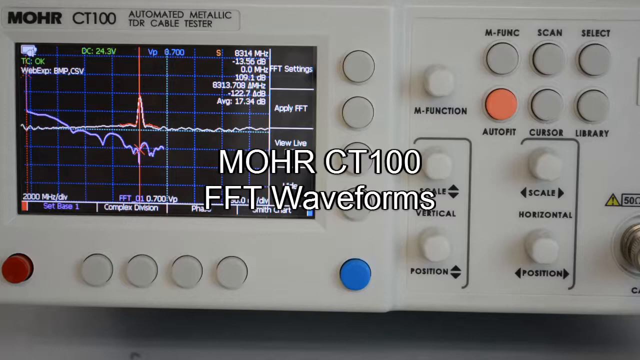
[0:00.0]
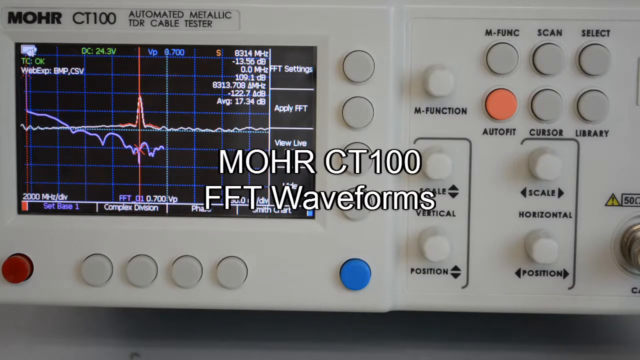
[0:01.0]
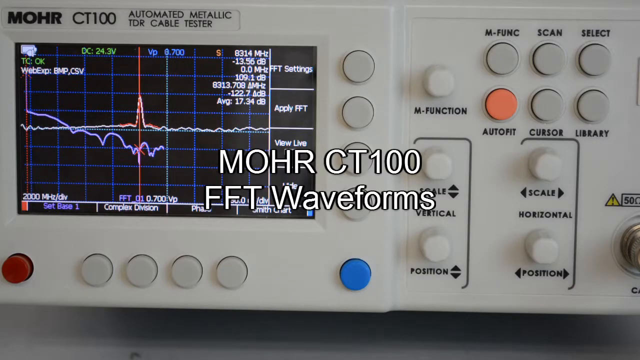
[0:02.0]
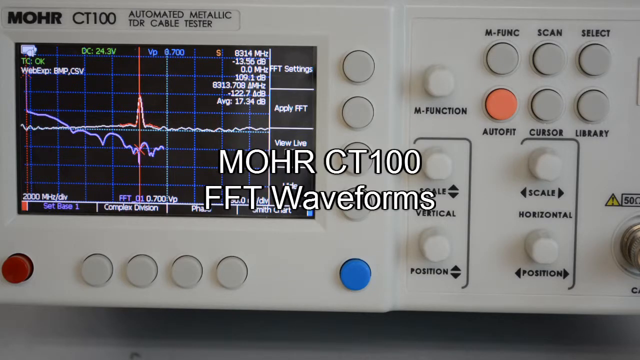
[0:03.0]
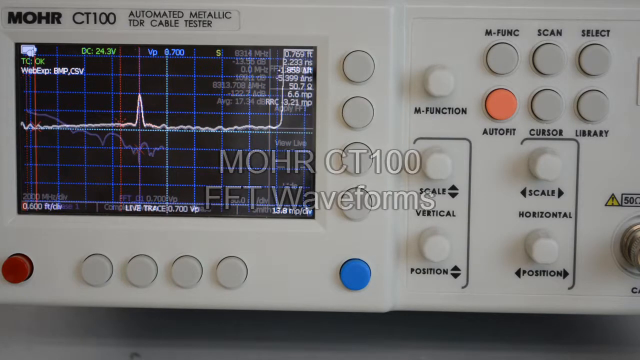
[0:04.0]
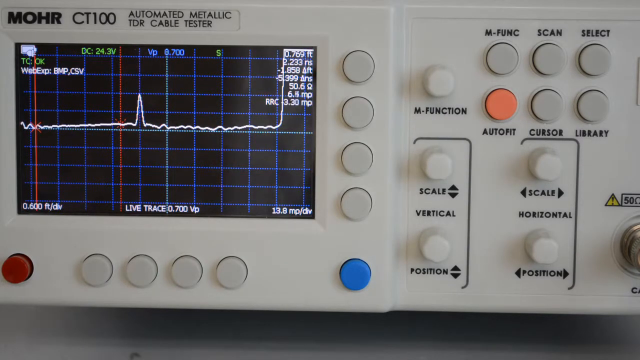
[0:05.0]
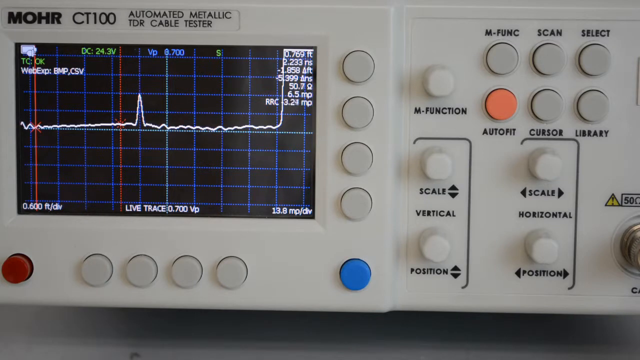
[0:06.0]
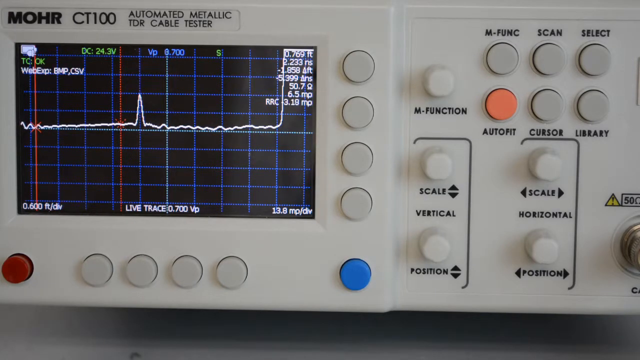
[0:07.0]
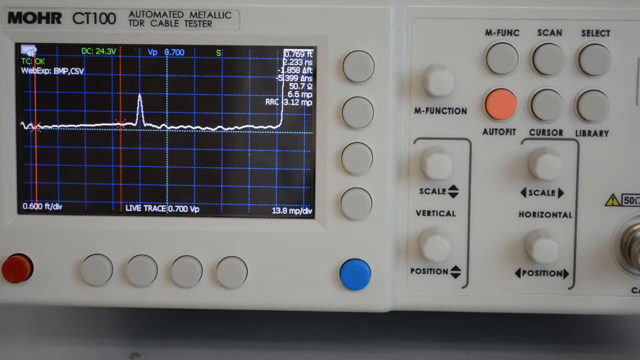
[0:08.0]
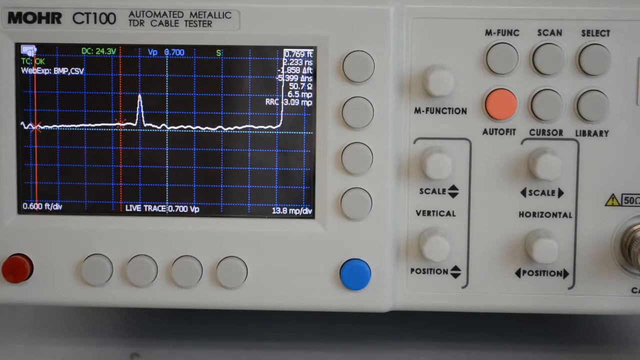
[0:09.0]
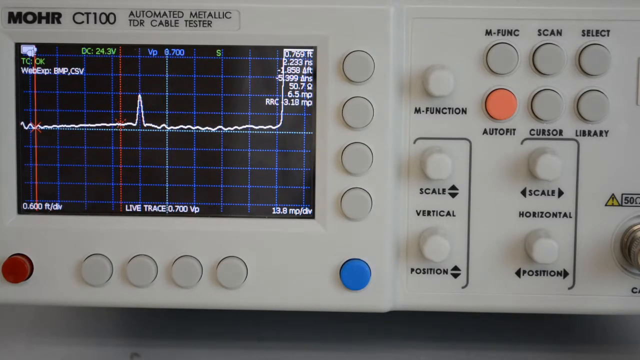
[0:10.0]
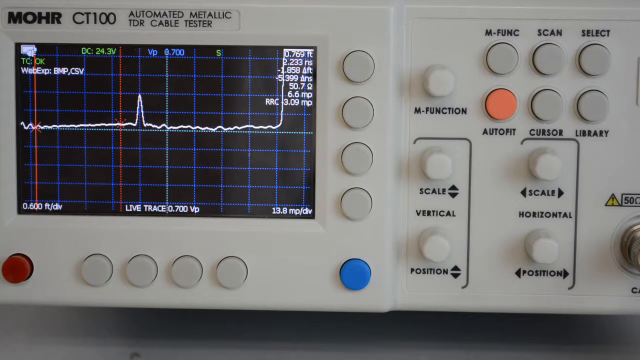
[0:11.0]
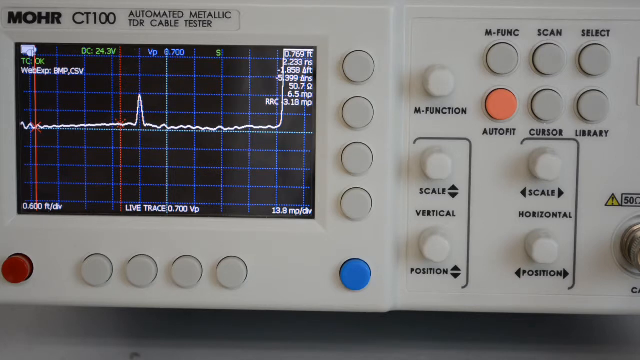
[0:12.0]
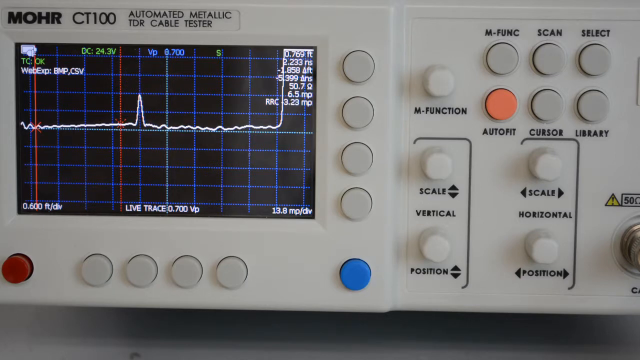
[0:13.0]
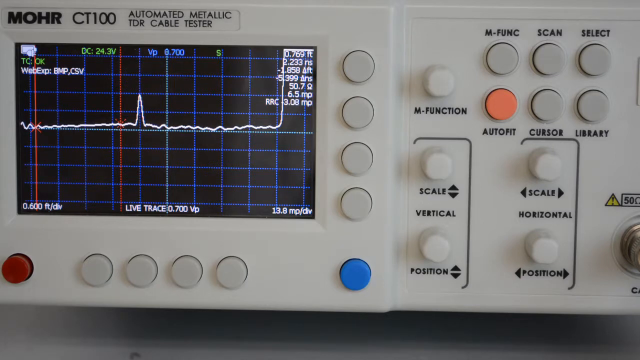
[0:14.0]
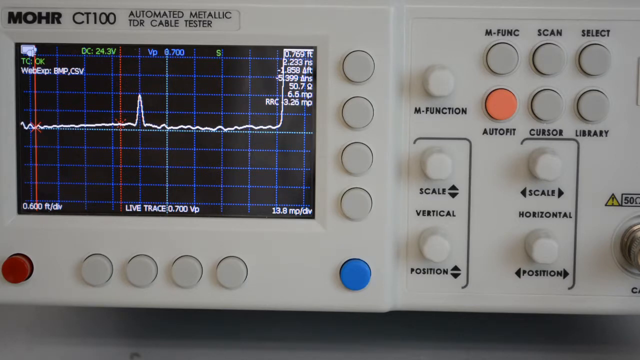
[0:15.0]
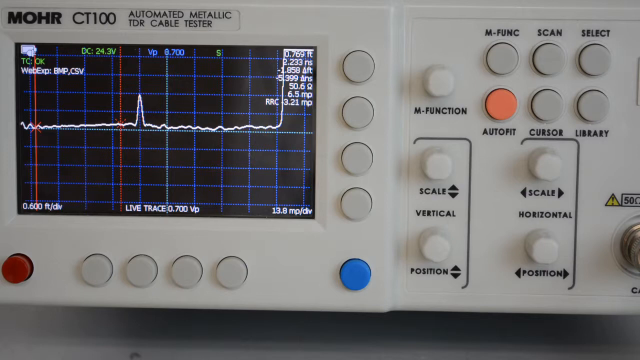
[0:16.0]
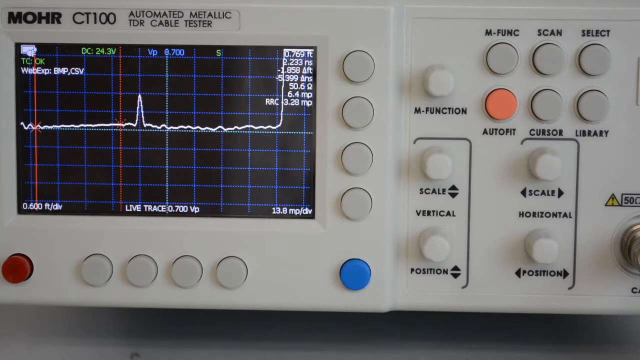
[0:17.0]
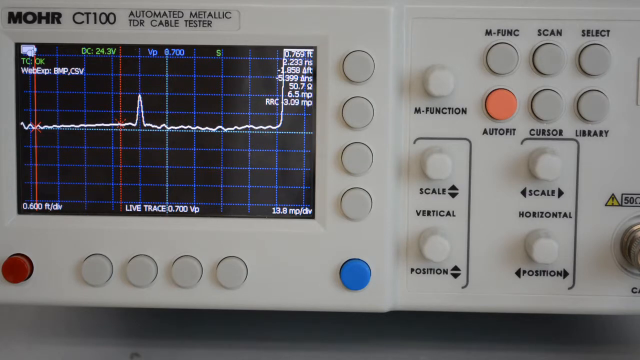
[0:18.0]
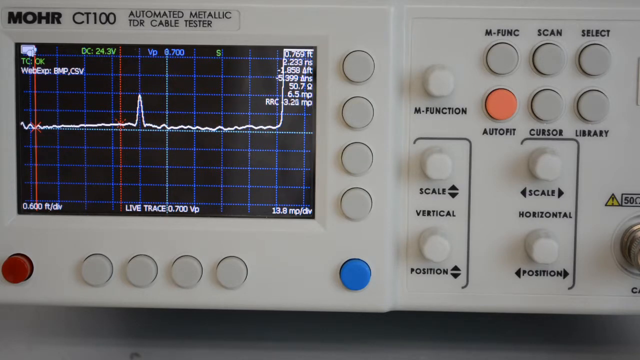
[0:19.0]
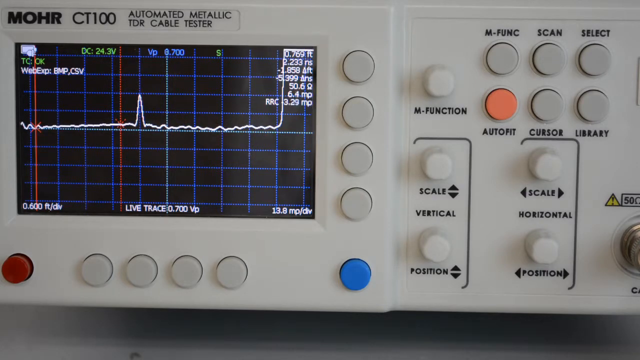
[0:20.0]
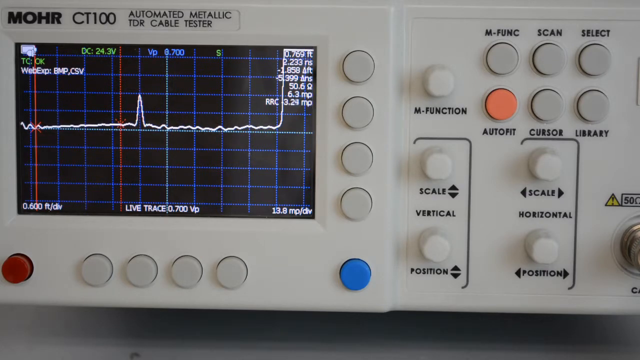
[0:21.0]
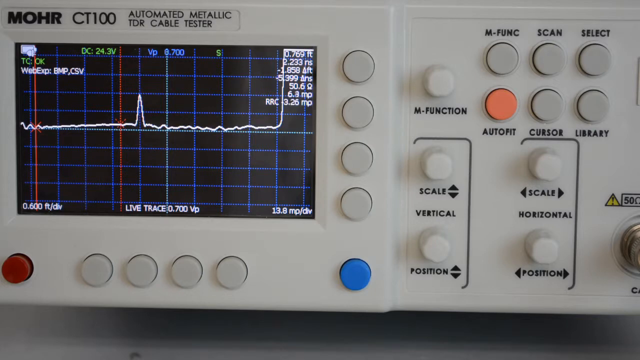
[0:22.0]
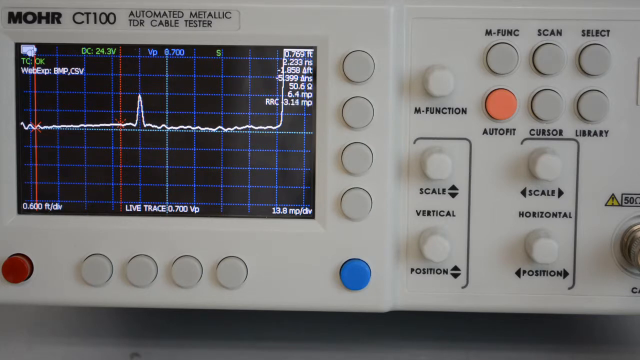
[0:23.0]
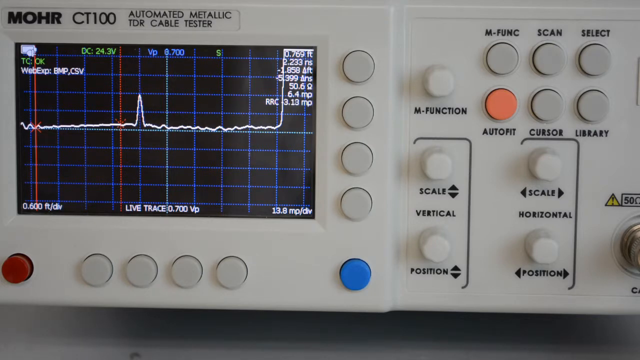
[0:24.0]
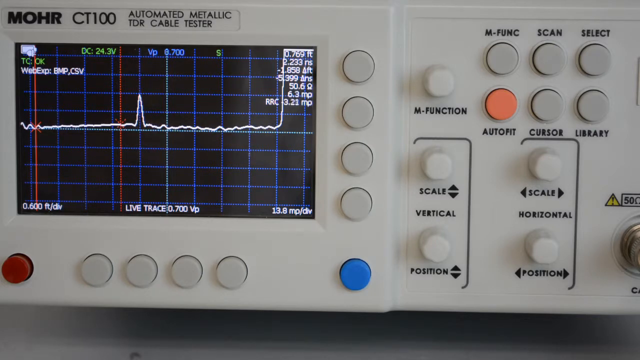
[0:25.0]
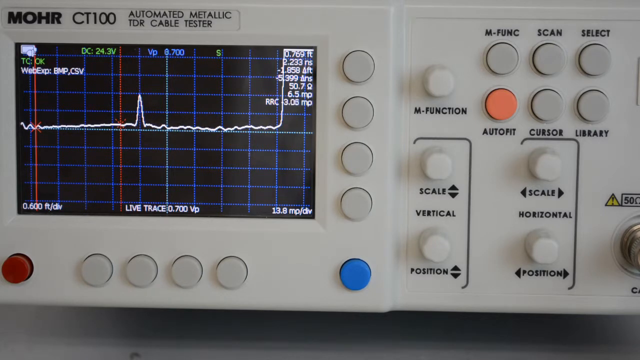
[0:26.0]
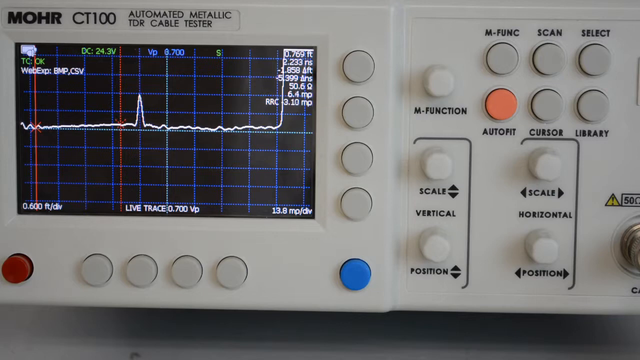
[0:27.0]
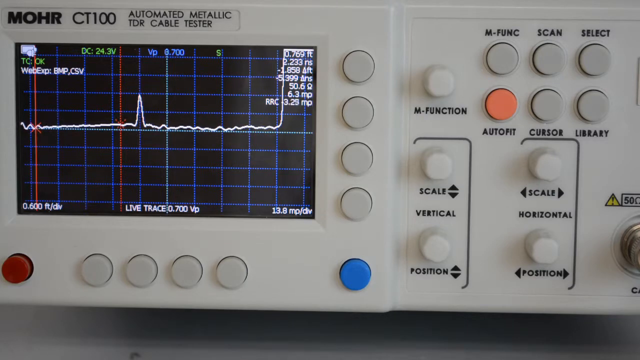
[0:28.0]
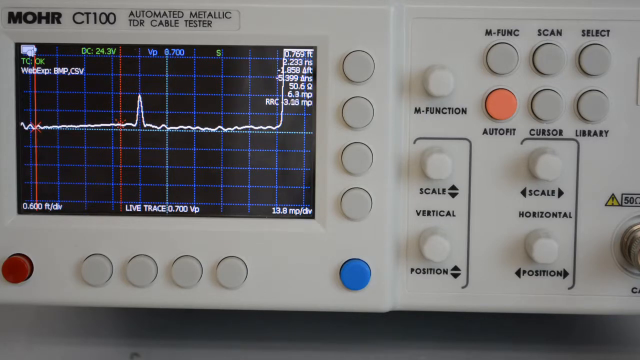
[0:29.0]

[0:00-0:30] A close-up of a machine shows the words "automated metallic TDR cable tester" on the screen itself. The screen, located in the upper left corner of the machine, displays several lines and graphs. Several round, flat buttons protrude slightly from the machine, about half an inch or so; they come in various colors and are responsible for various tasks. Text in the center of the screen reads "MOHR CT100 FFT waveforms" and stays there for several seconds before fading away, leaving just the close-up of the machine. The camera stays focused on this area without any movement, panning or shaking, giving a clear view of the different buttons. Some function or testing is taking place, as the numbers in the upper right corner of the machine's screen are fluctuating and cycling.